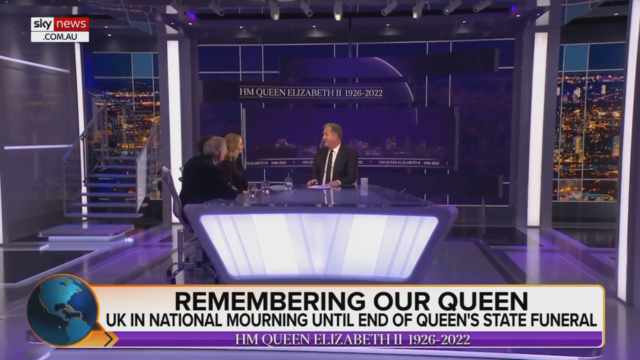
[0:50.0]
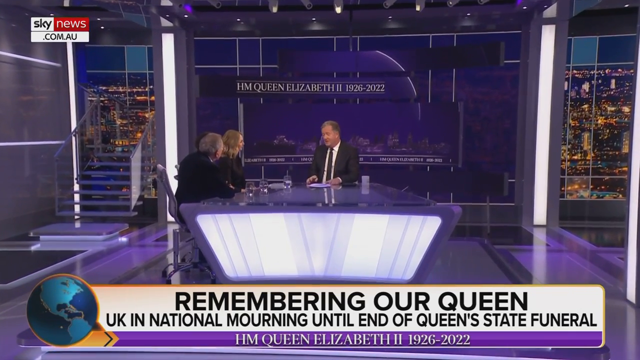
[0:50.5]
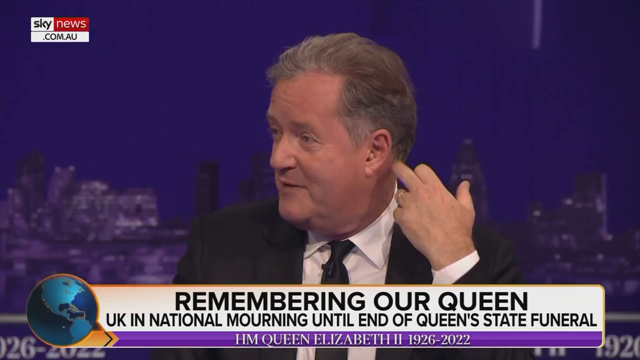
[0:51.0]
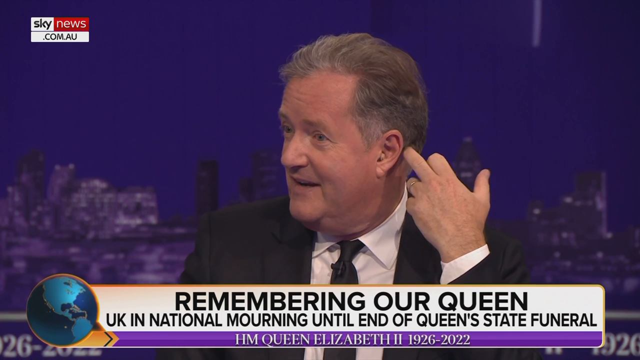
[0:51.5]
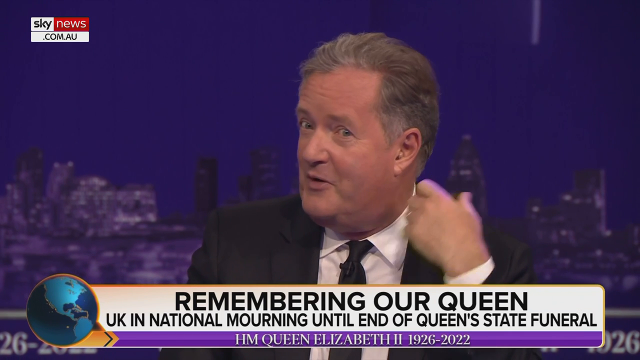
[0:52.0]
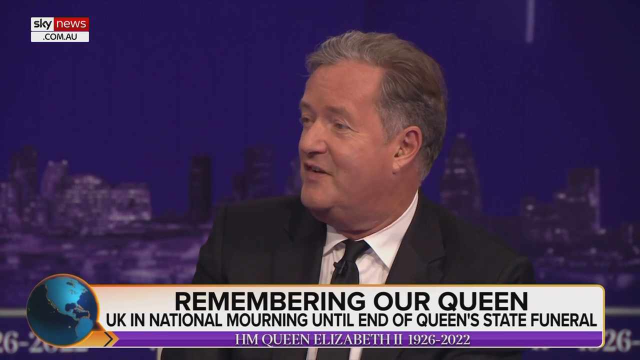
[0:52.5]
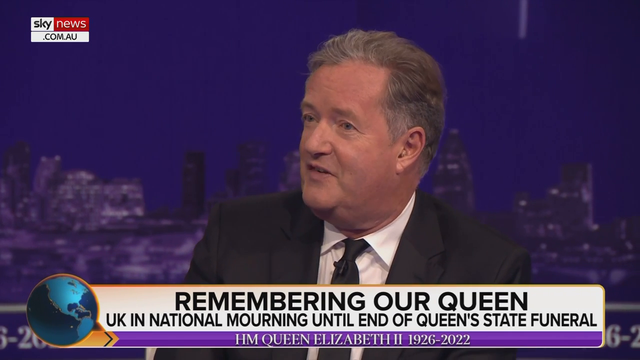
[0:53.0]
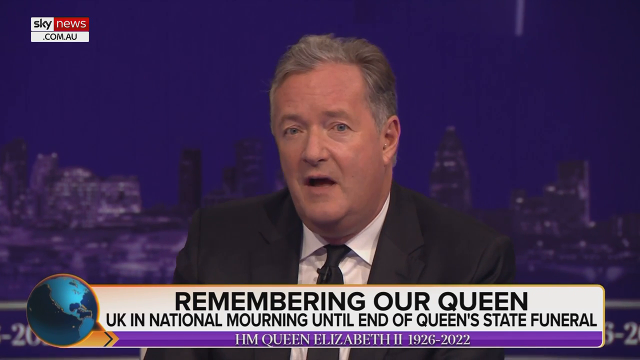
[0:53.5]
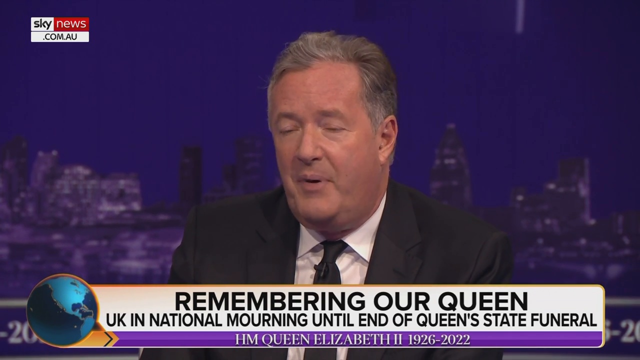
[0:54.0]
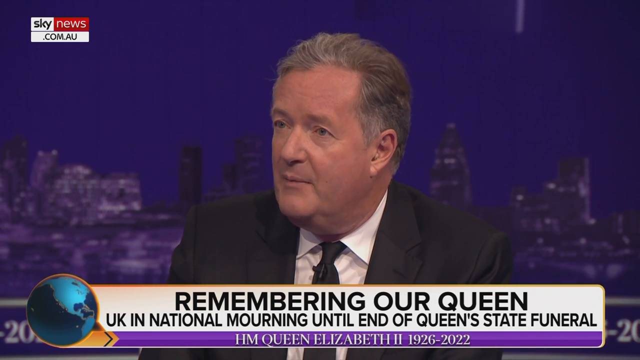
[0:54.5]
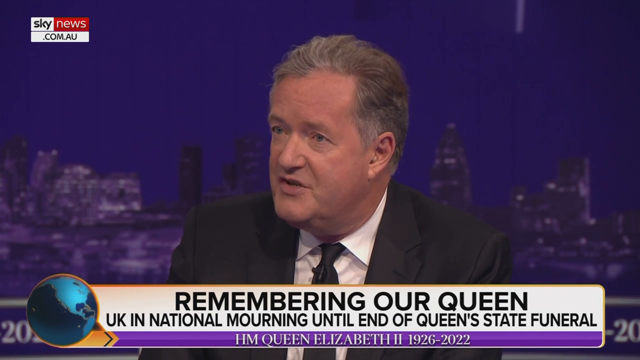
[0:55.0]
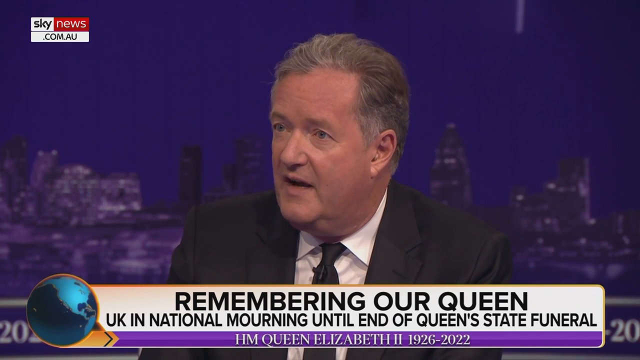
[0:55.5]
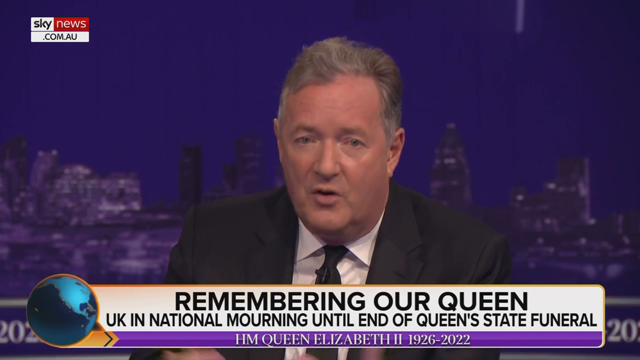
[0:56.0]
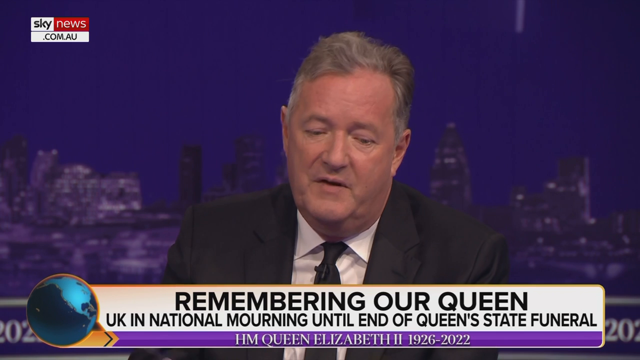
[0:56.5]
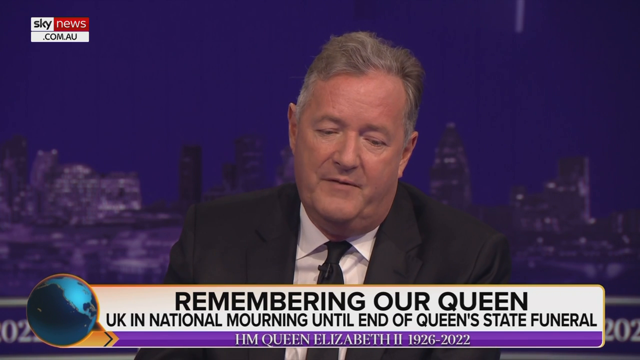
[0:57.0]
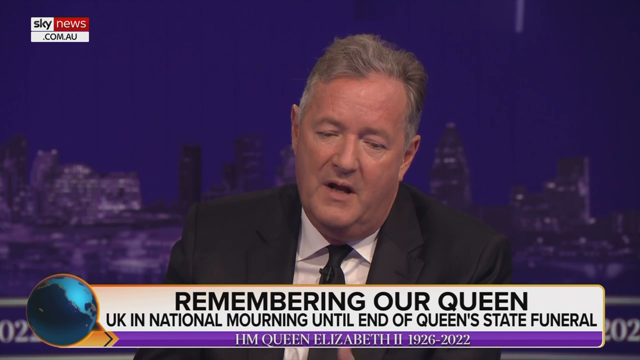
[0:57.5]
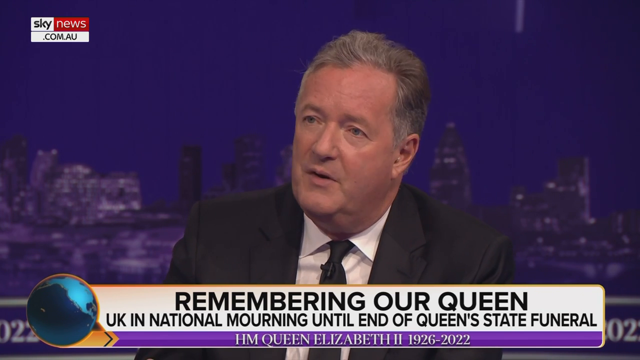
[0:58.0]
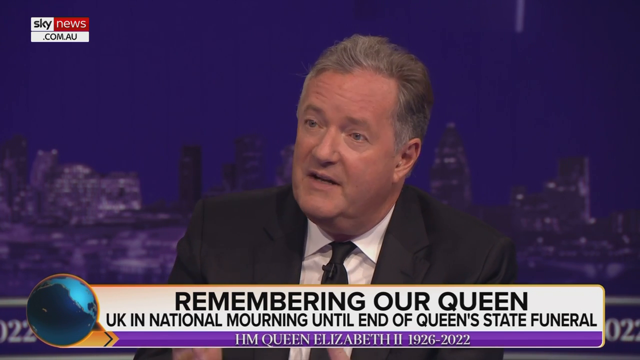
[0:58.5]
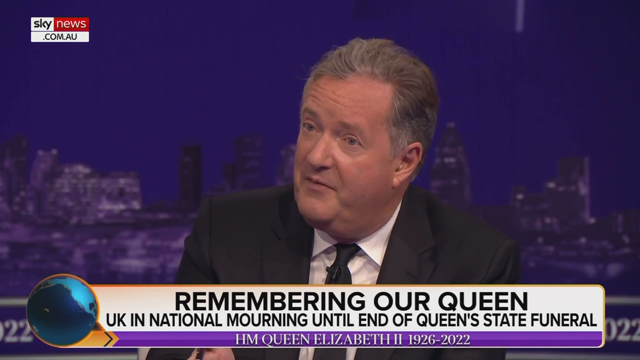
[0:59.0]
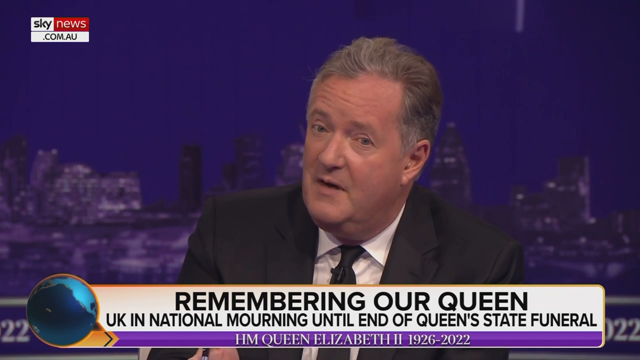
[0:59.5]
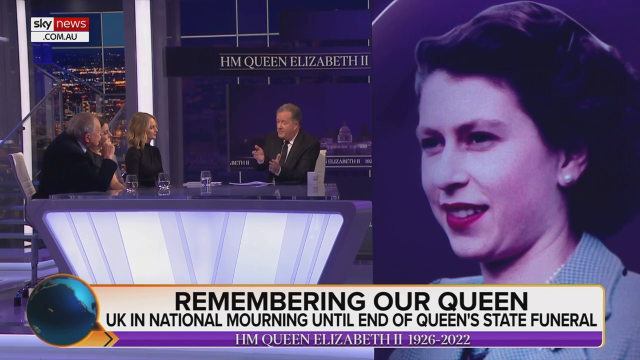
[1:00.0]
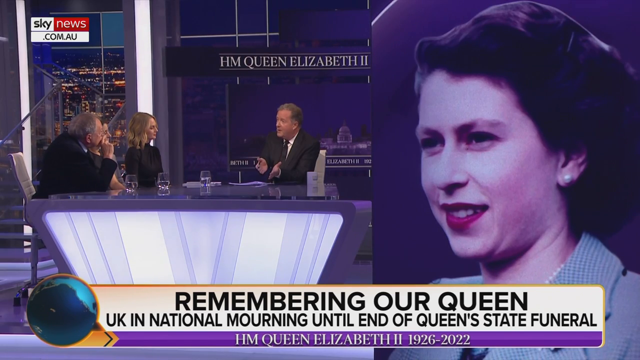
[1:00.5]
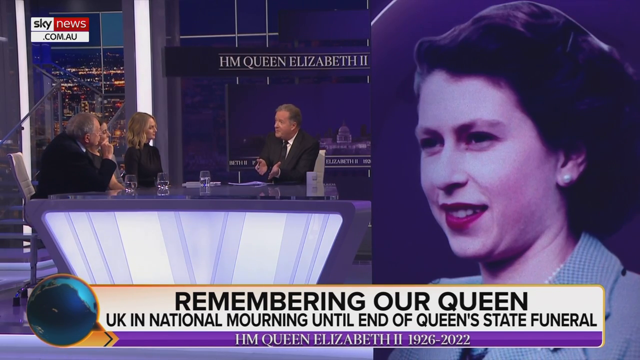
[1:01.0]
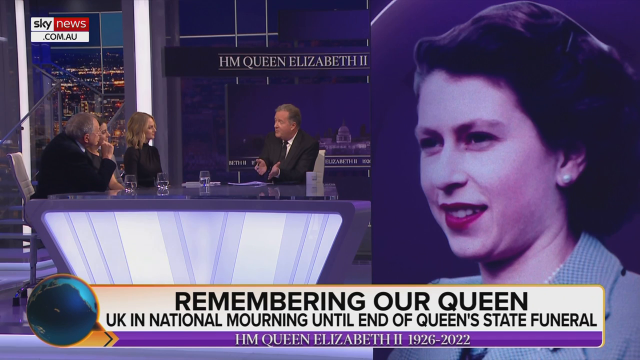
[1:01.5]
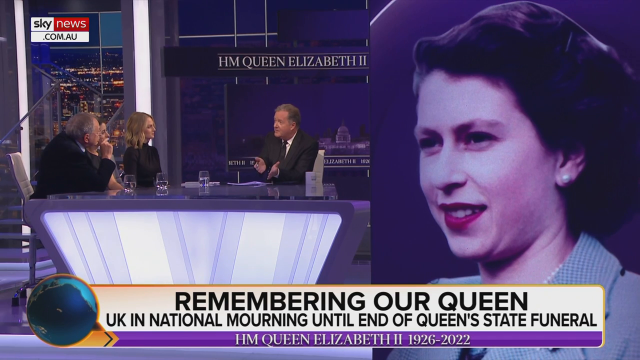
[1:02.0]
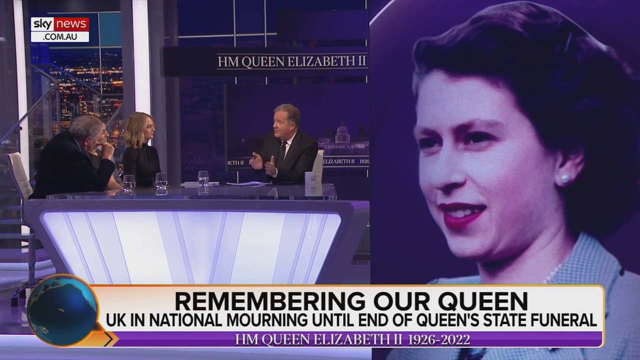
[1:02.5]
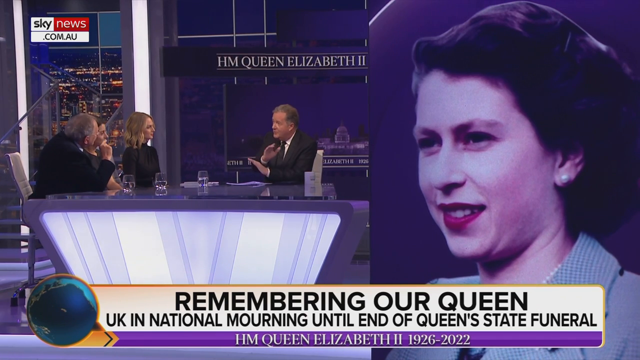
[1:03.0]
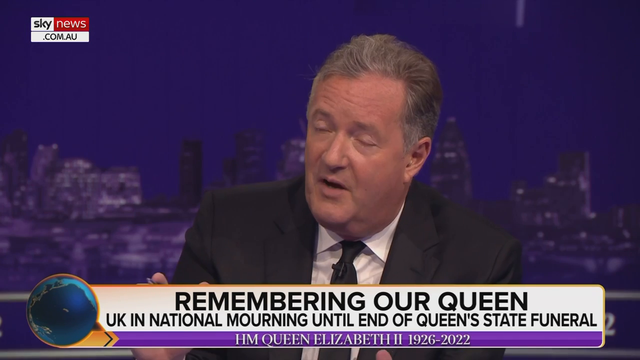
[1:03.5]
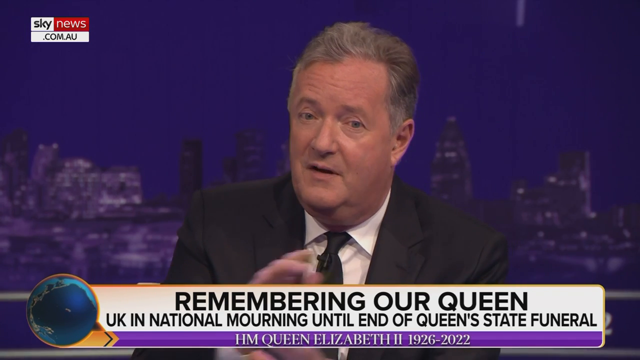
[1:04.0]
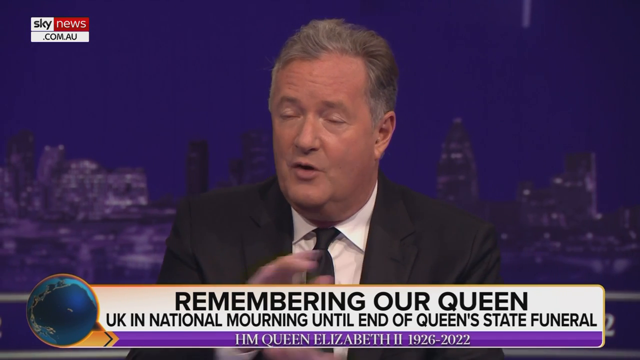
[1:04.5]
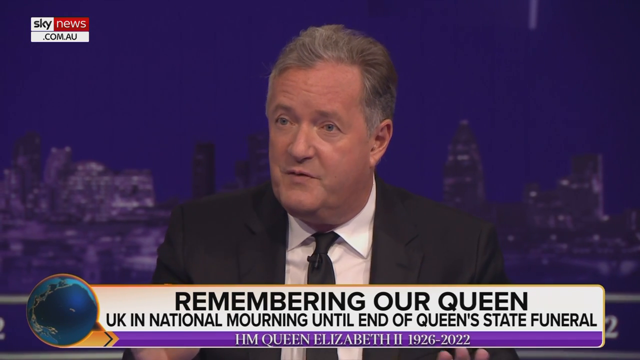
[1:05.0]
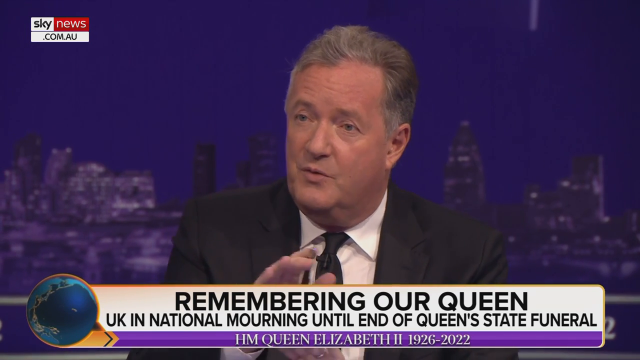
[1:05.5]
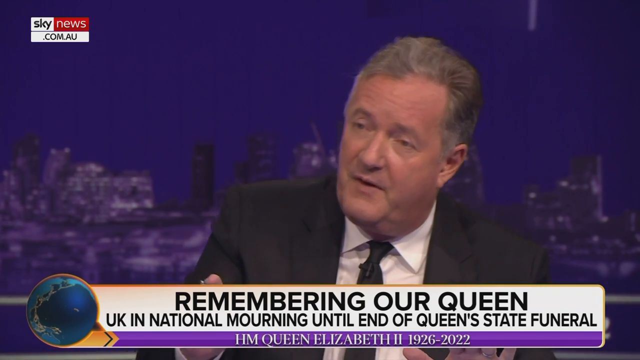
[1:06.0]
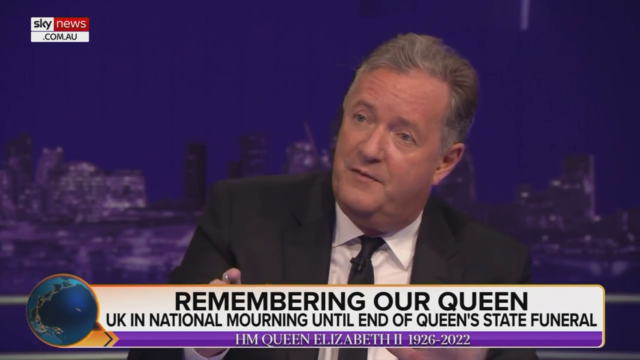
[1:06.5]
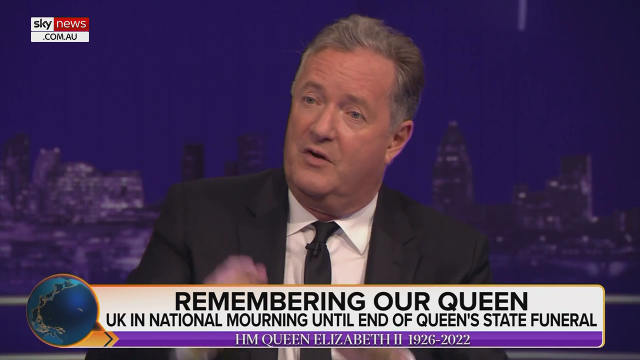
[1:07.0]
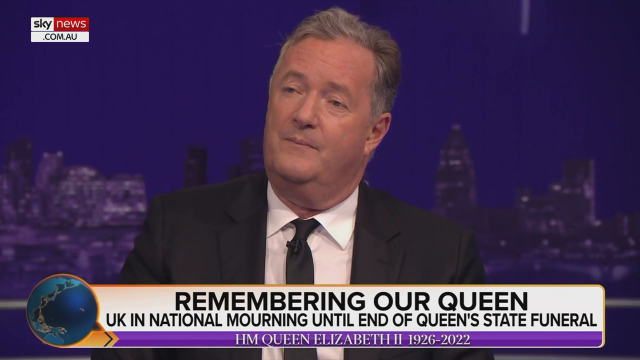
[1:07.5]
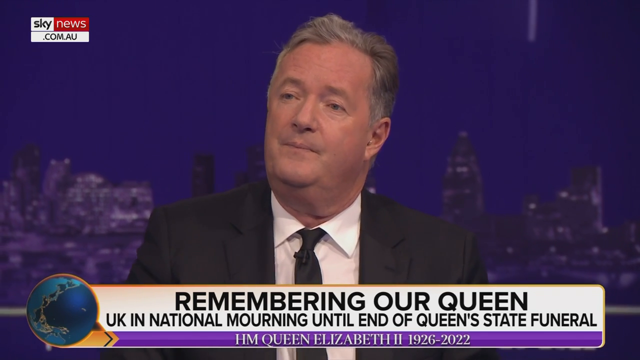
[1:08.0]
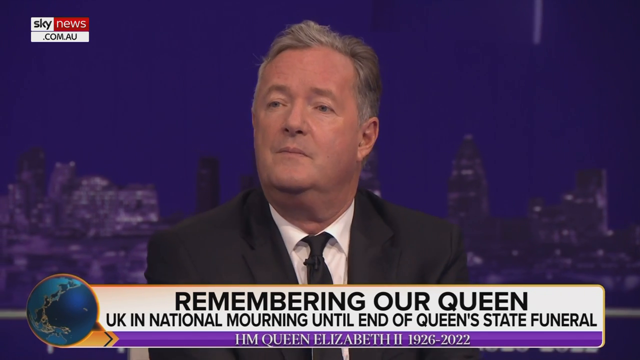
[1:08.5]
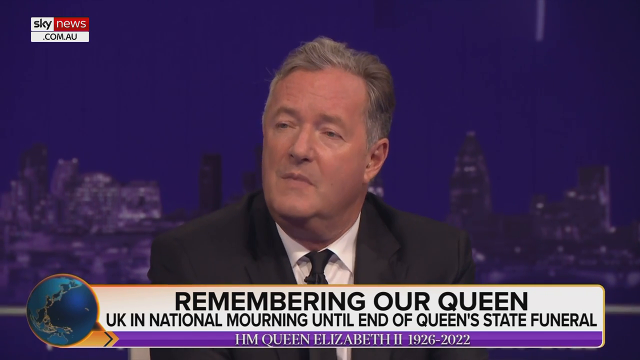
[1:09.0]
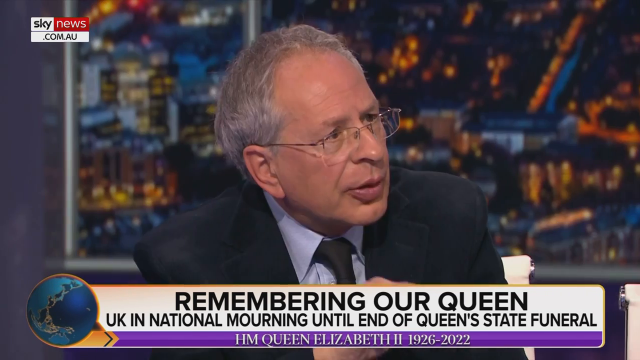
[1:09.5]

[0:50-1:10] A man behind the news desk in the center looks to his right as he speaks to what looks like three panelists seated to his right. The camera zooms in on the man, who scratches his hair. He appears to be the UK newscaster Piers Morgan, and he also wears a black suit with a black tie and a white shirt. Behind him as he speaks is a city skyline, and it looks to be nighttime. The overall hue of the studio is almost purple. The camera zooms out to show the full size of the table again, with a picture of a young Queen Elizabeth on the right side of the frame. Piers Morgan appears to be speaking and asking a question.